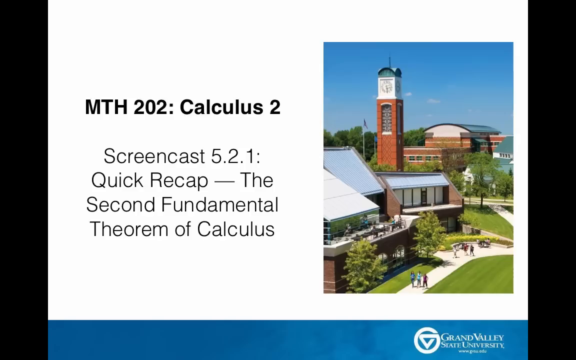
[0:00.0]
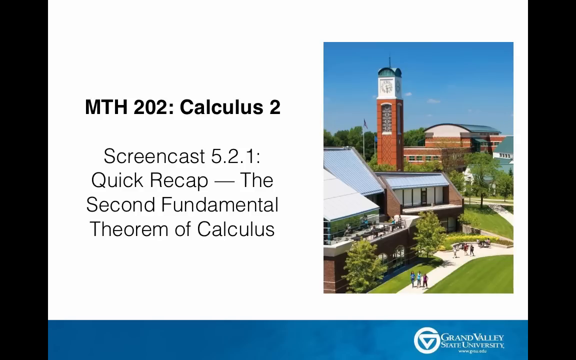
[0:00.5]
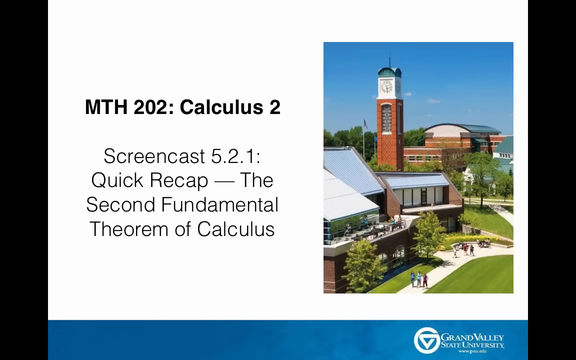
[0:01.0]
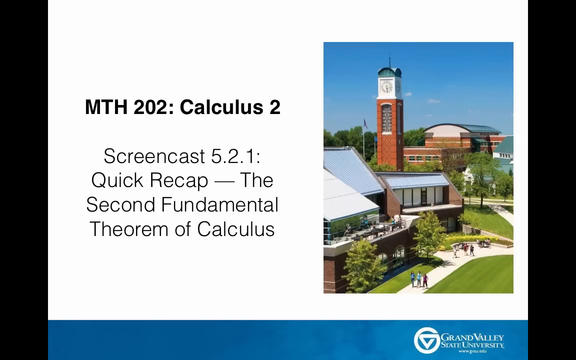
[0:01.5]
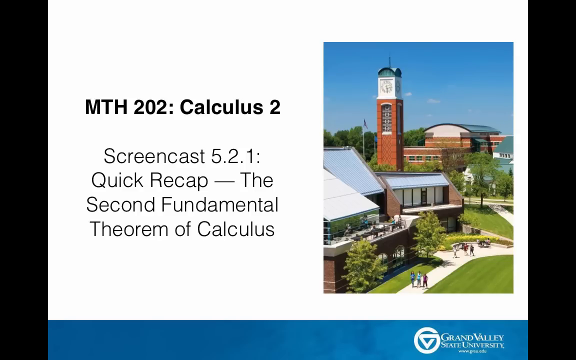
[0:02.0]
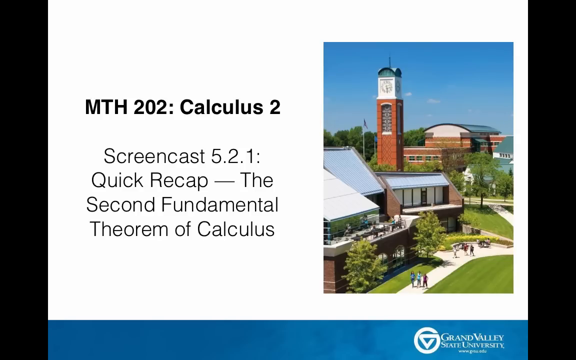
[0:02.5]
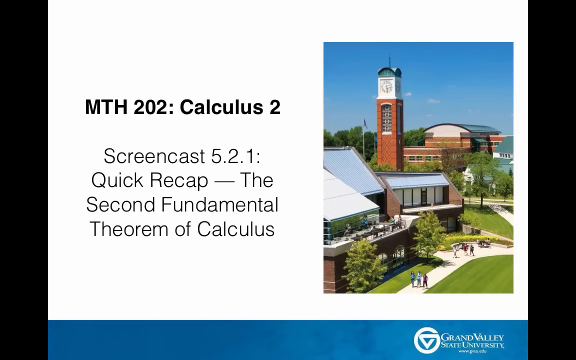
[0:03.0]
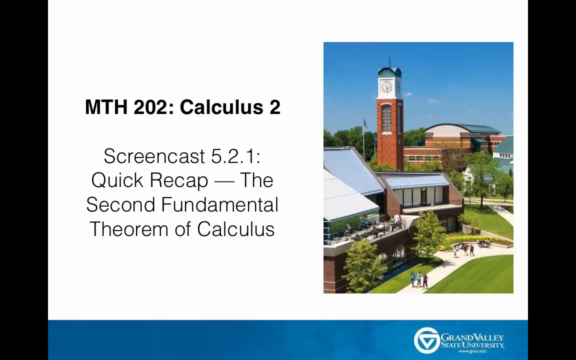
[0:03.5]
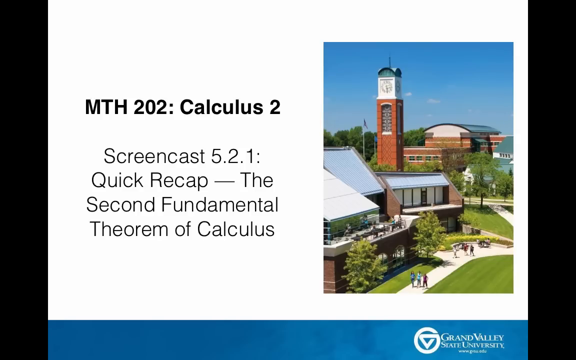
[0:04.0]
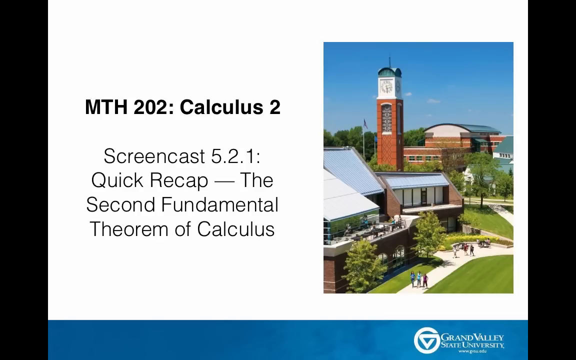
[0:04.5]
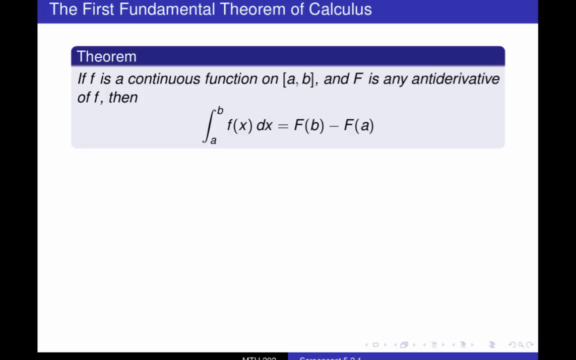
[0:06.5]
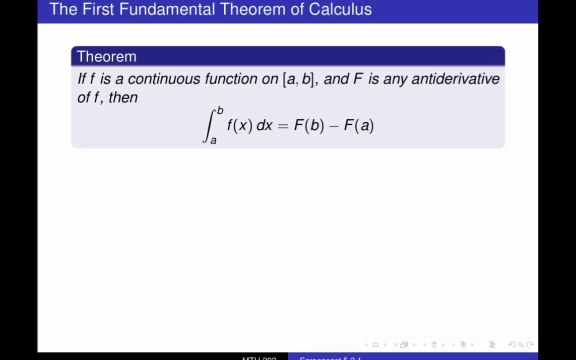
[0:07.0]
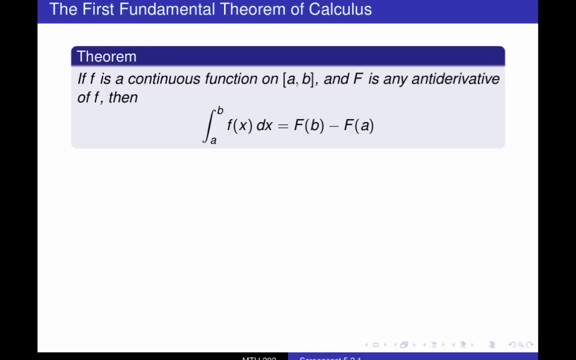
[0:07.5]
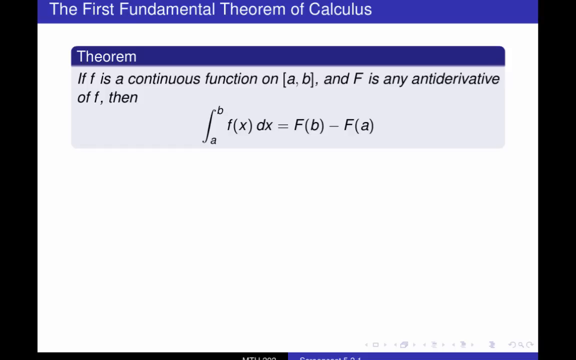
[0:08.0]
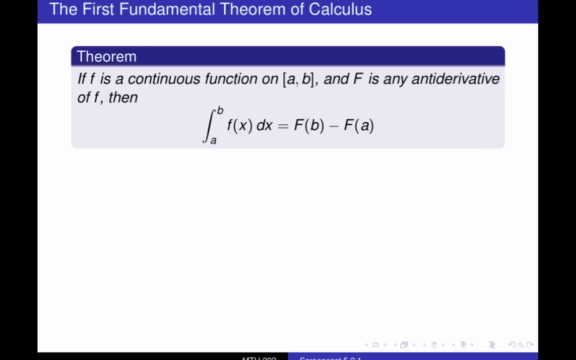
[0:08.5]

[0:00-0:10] An introduction to a Calculus 2 class on the second fundamental theorem of calculus appears. There is what appears to be a college campus with a picture beside it. The main page has "MTH 202 Calculus II" in bold, with some subtext below it; the presentation is for Grand Valley State University. The scene then changes to a second slide showing the theorem, an if-then statement, as an example. No people appear, as it is just a presentation of text and images.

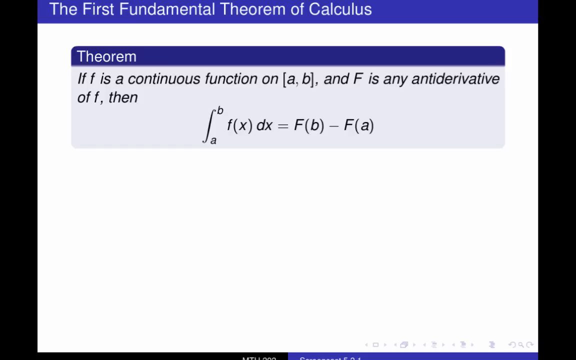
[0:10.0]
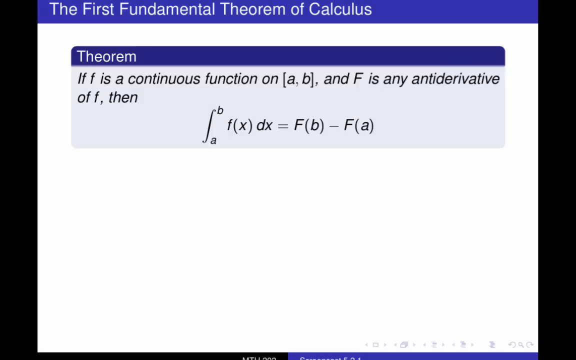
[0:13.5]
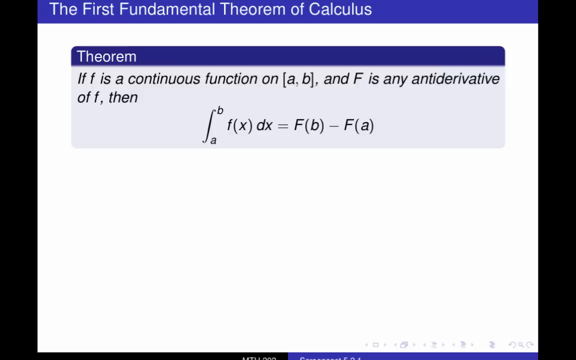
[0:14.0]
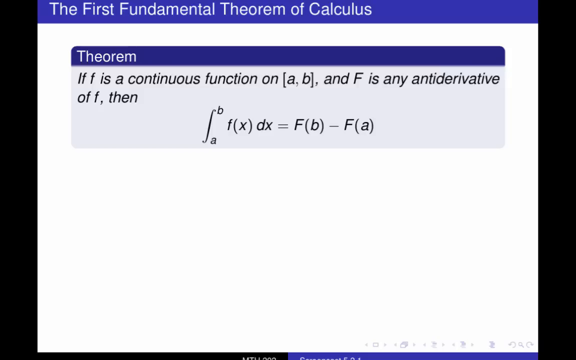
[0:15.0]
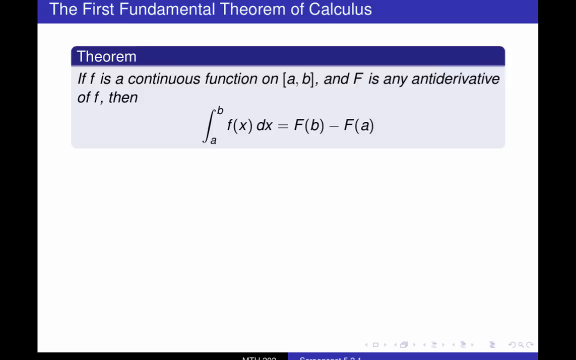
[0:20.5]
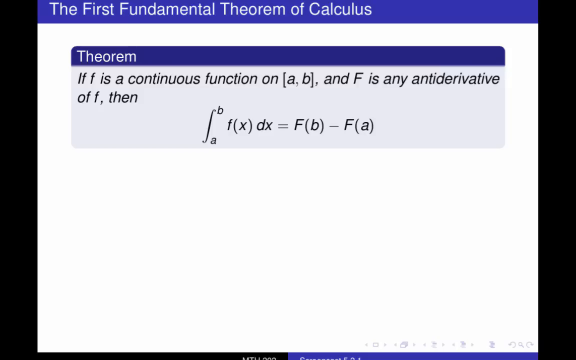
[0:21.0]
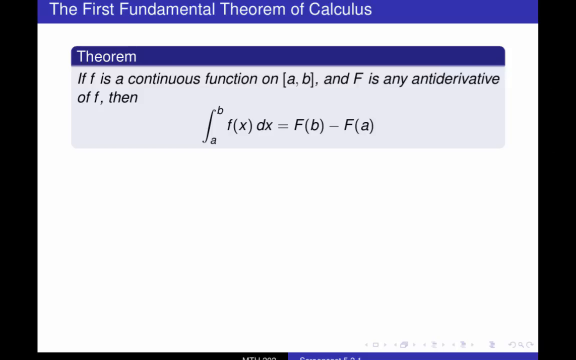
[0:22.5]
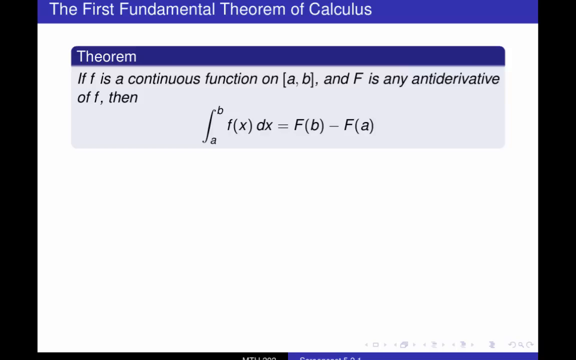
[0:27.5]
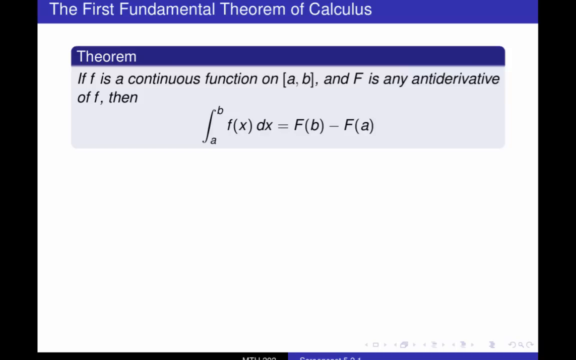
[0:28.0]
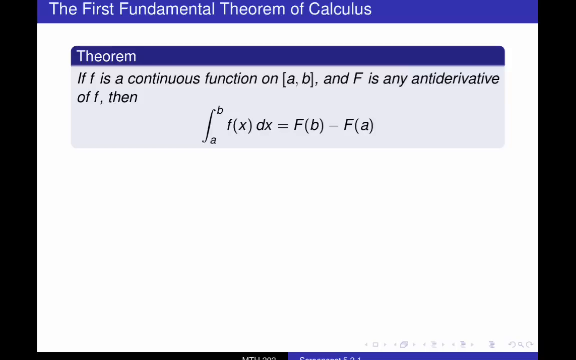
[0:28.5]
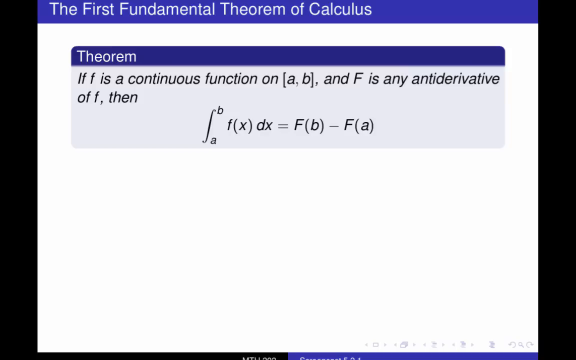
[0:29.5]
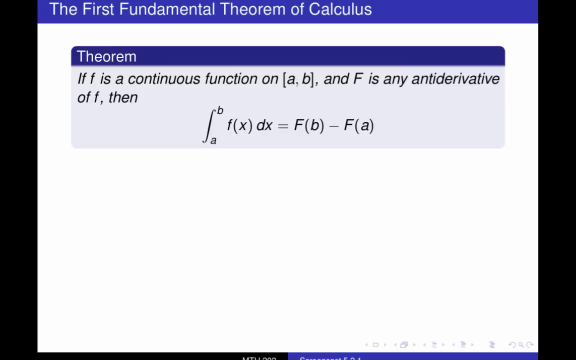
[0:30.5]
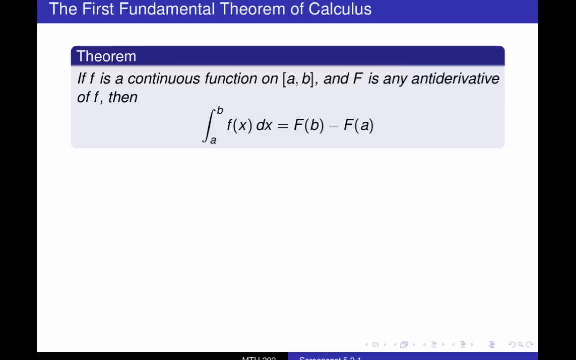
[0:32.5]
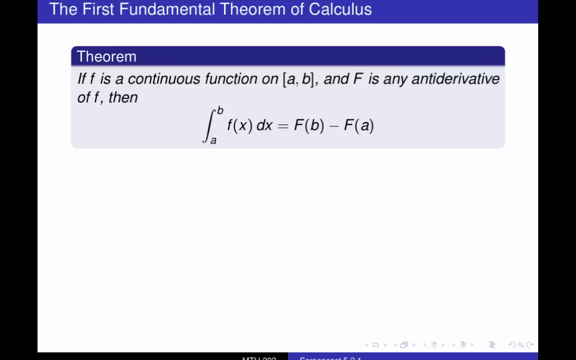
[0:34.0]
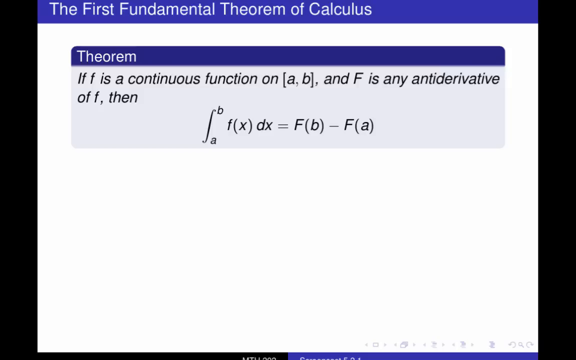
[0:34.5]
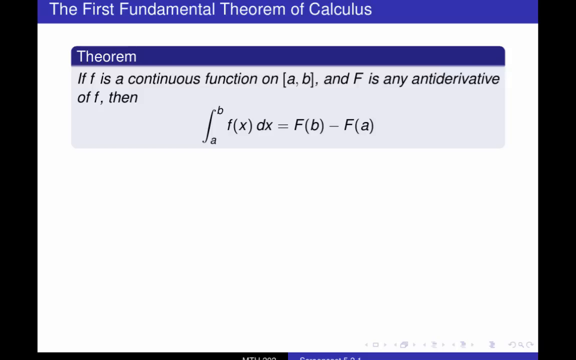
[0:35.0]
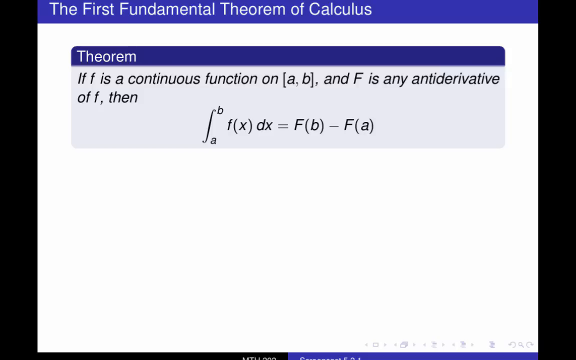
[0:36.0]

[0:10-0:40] What appears to be a Grand Valley State University slideshow for a Math 202 Calculus 2 class shows a quick recap of the Second Fundamental Theorem of Calculus. It stays on this for a few moments, then switches to a slide with an if-then statement on the First Fundamental Theorem of Calculus, stating "if f is a continuous function on a, b, and f is any antiderivative of f, then", followed by an example. It stays on this equation for the rest of the shot. On this second slide, most of the screen is blank white space apart from the equation. Around the middle, a cursor periodically moves around the screen. After the first slide, a partially cut-off taskbar of some sort is visible; its letters are cropped, so it is illegible.